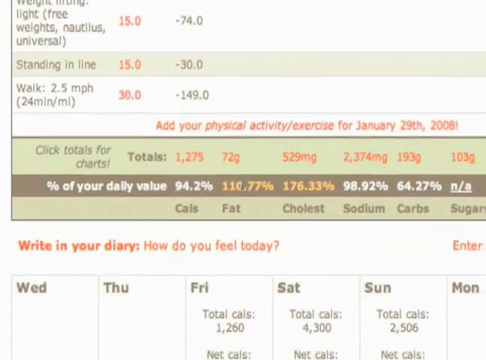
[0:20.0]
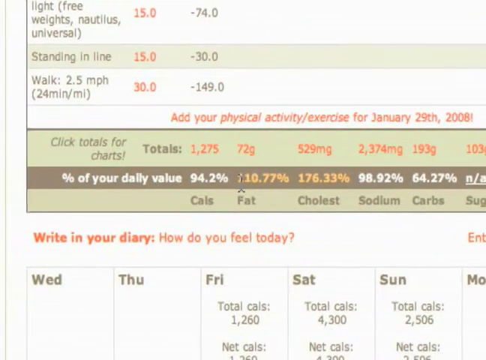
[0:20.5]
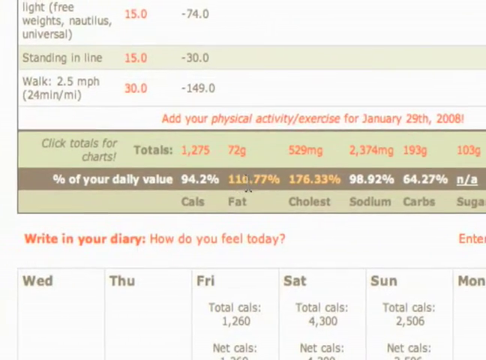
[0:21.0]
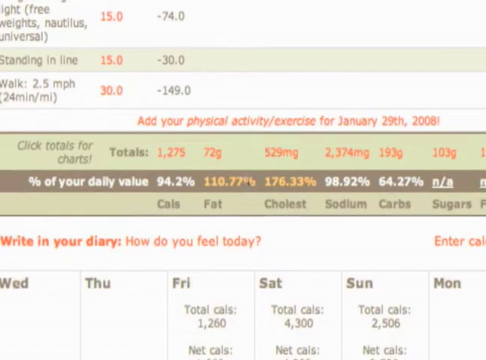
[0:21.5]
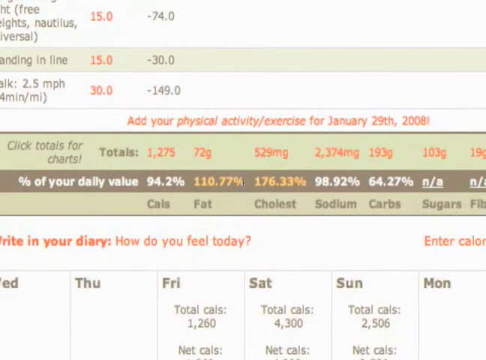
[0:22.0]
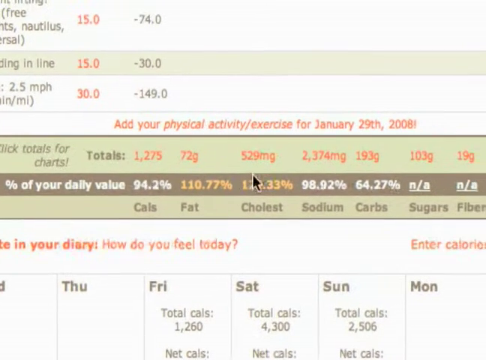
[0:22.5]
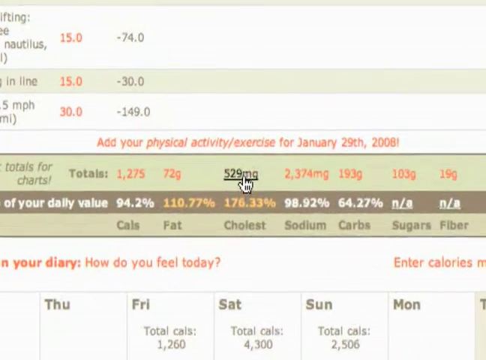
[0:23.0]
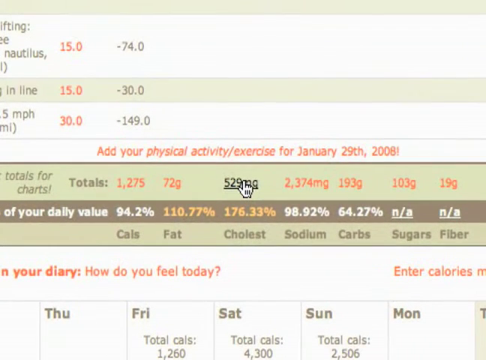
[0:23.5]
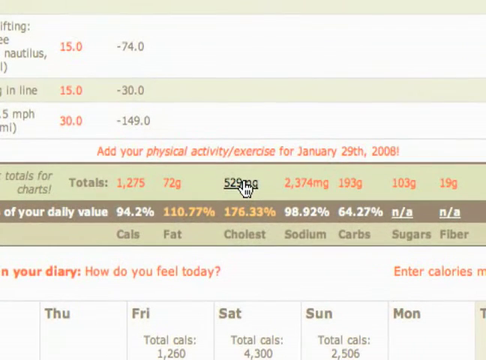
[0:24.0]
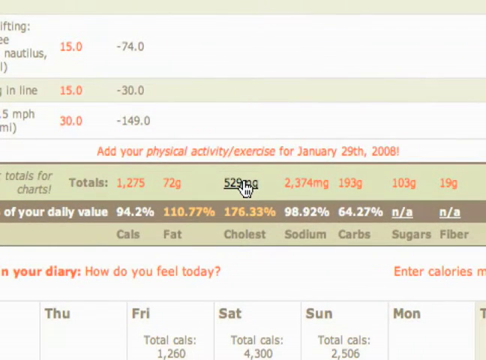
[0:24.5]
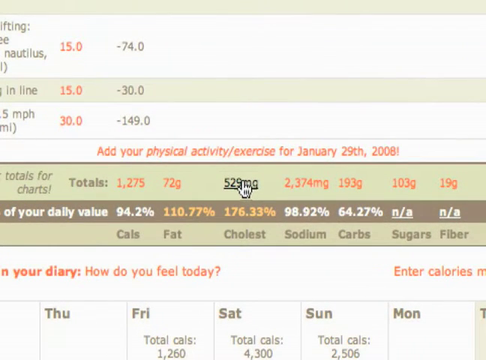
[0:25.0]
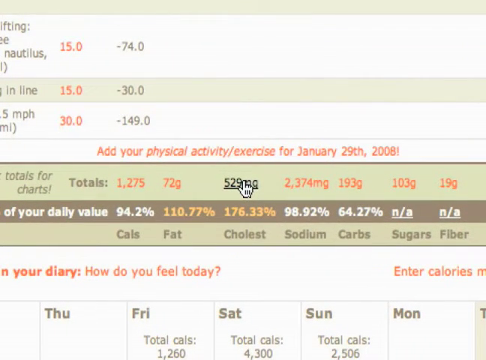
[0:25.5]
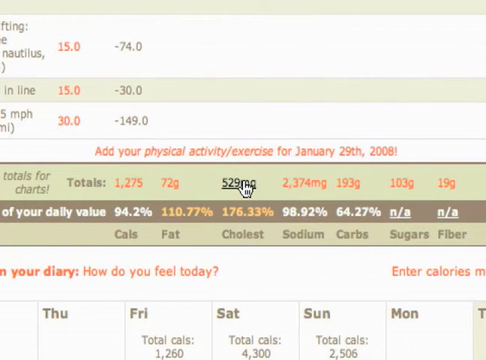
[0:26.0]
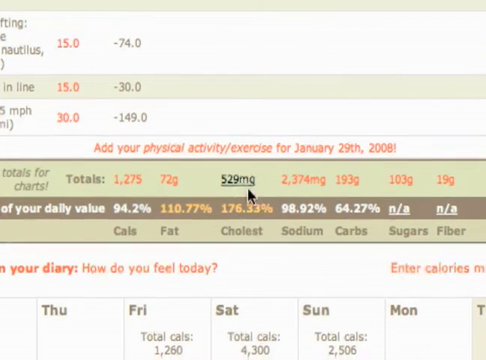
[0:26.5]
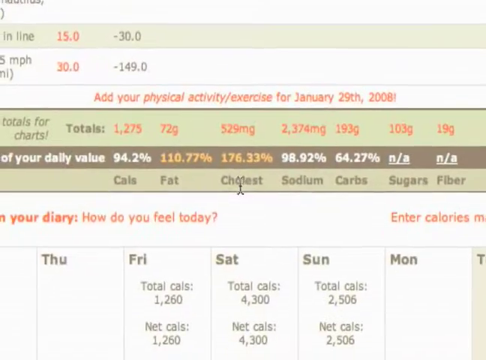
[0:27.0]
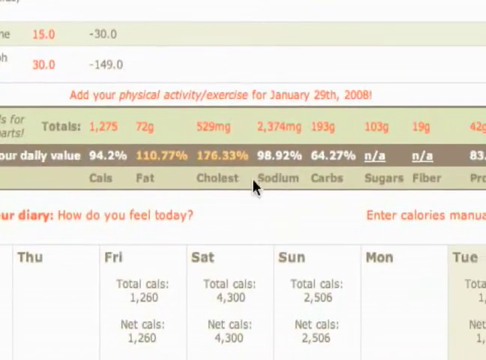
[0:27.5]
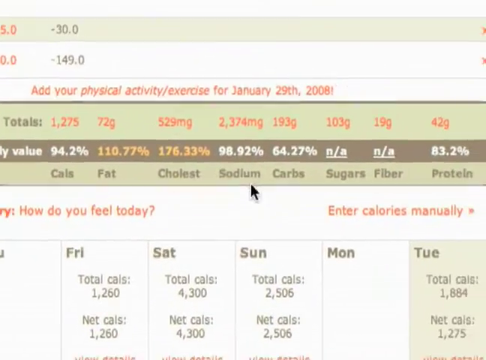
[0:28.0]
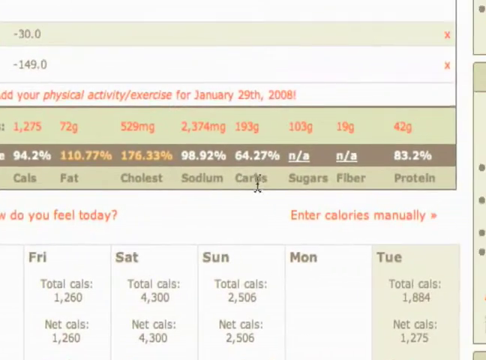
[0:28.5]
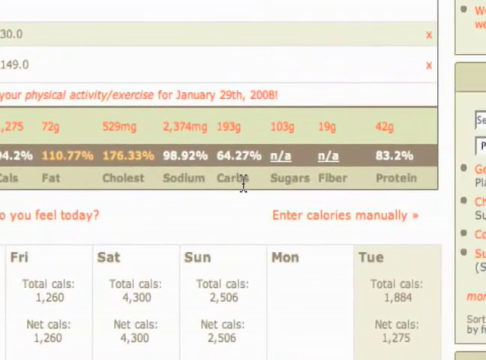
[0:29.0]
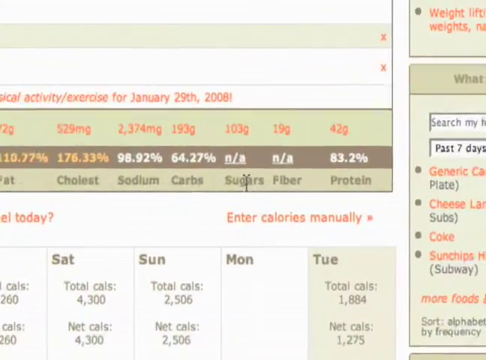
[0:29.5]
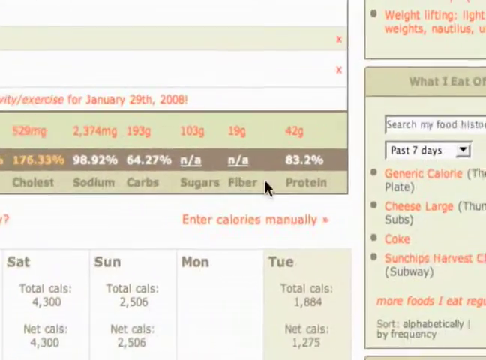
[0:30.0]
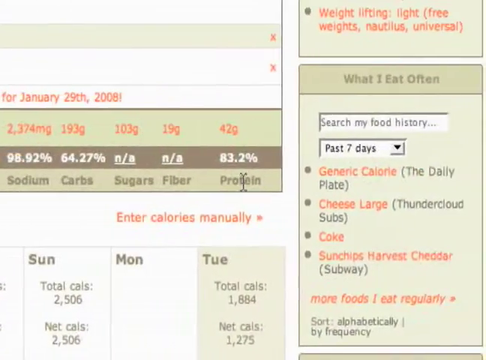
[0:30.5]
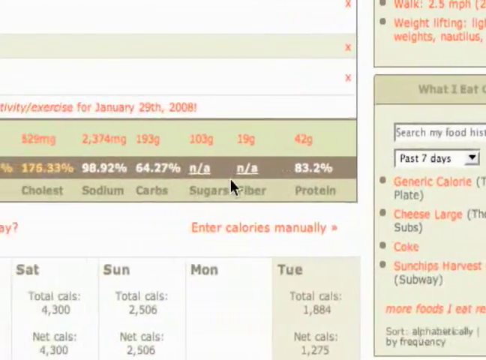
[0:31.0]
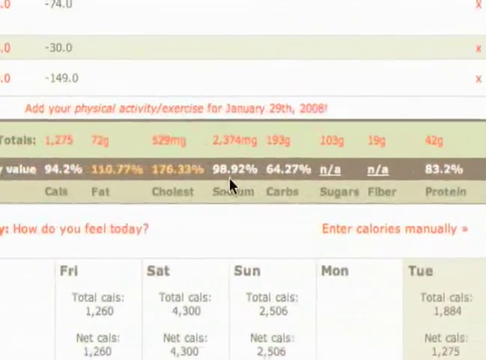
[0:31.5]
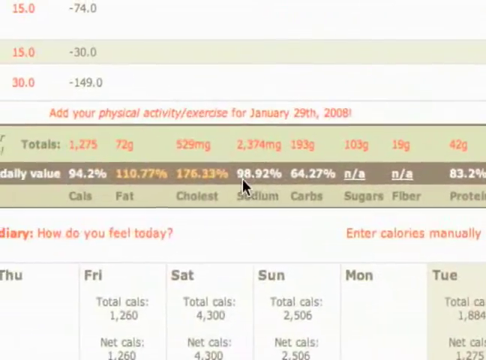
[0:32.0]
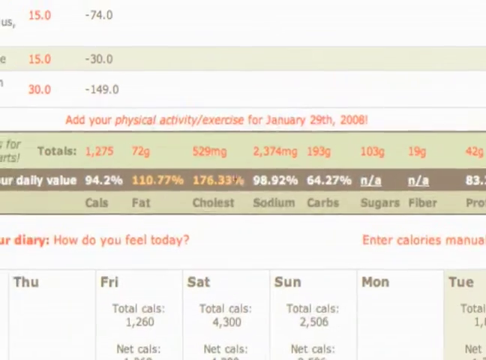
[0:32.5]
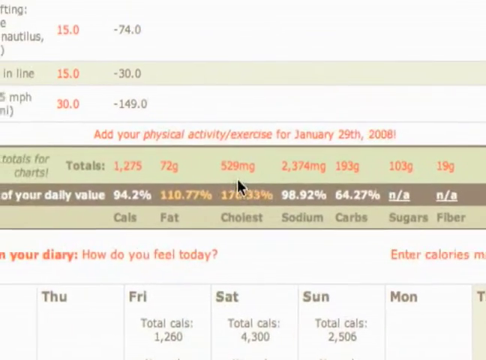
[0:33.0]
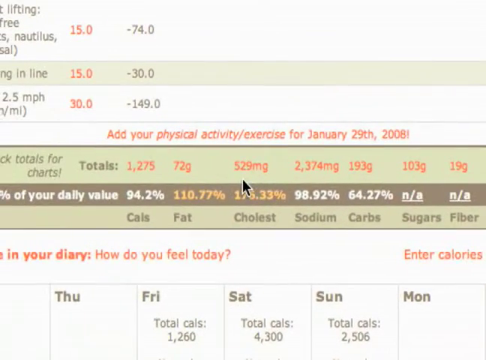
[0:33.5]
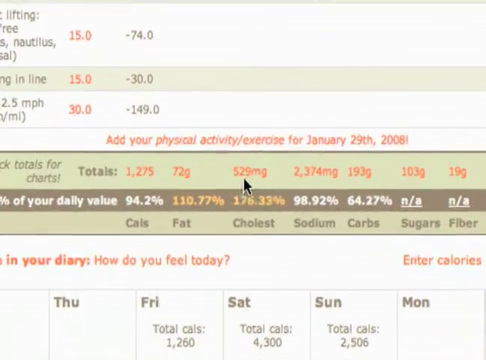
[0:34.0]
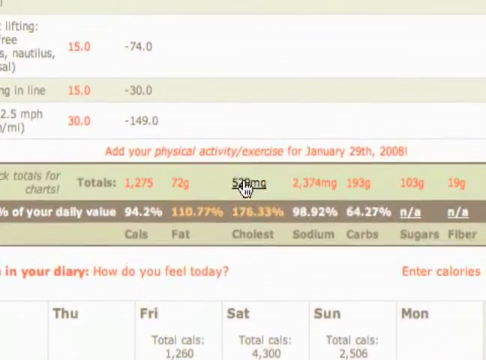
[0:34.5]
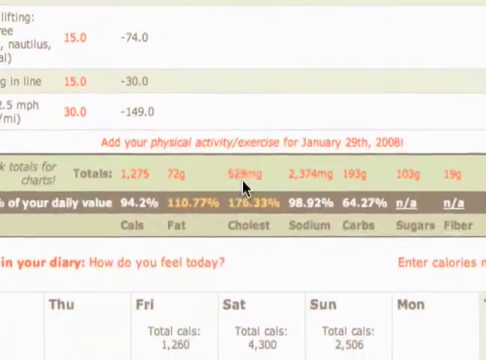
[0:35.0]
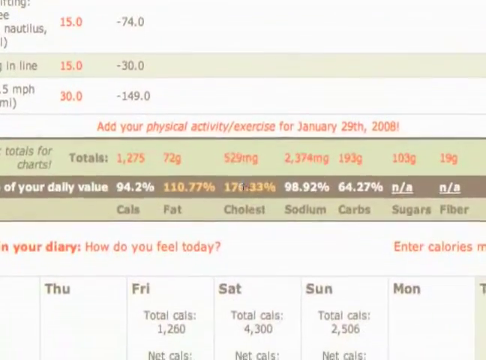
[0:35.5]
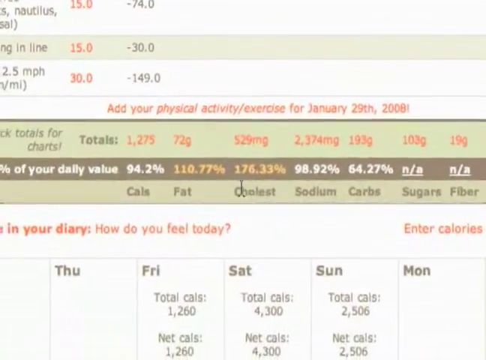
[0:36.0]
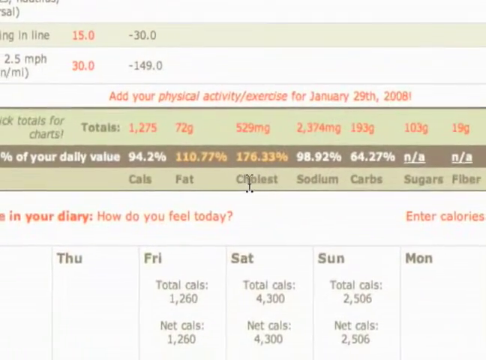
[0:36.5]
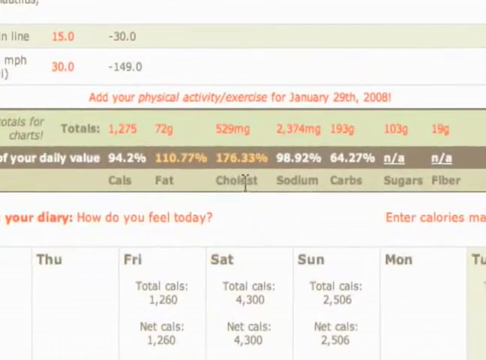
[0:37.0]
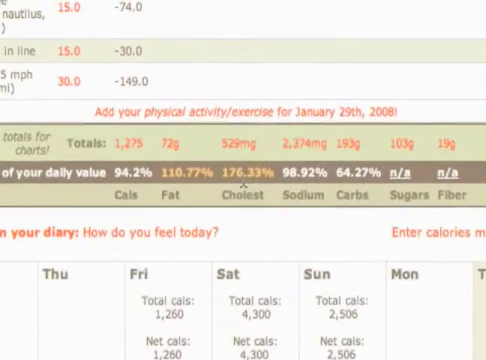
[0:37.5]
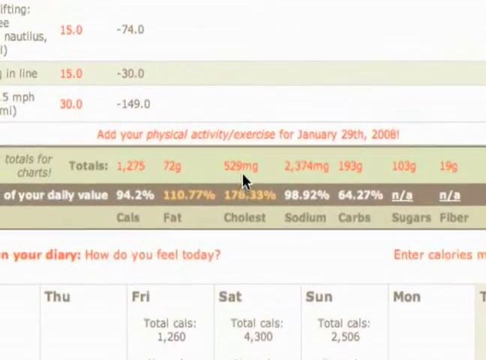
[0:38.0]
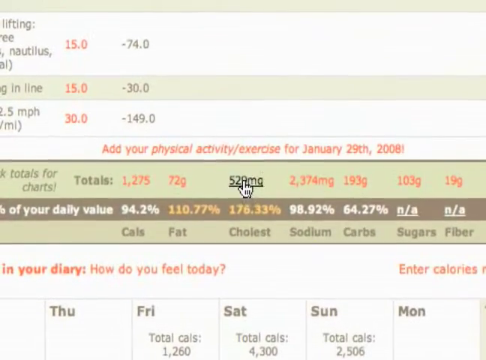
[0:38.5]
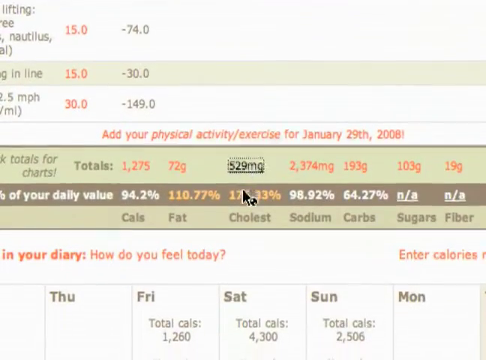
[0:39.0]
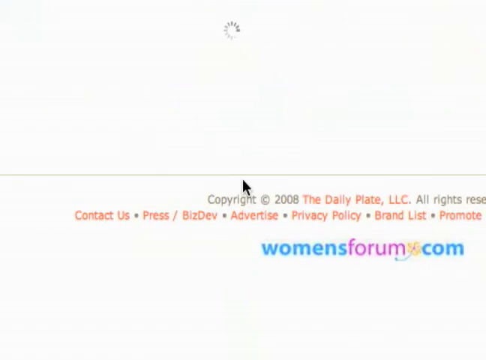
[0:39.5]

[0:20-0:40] The user moves the mouse across a screen showing calorie information for the food they have eaten and hovers over an attribute, 529 milligrams; the pointer changes to a little hand, almost like a glove. The user then moves the mouse away toward the right-hand side of the screen, almost as far right as it can go, then back left to the 529 milligrams attribute, where the hand or glove icon appears again. The user moves off it, returns to it, and finally clicks it.